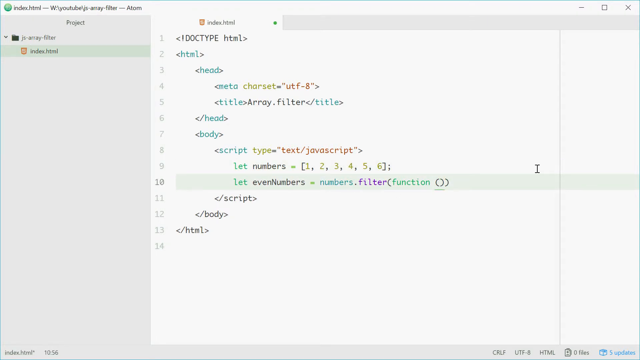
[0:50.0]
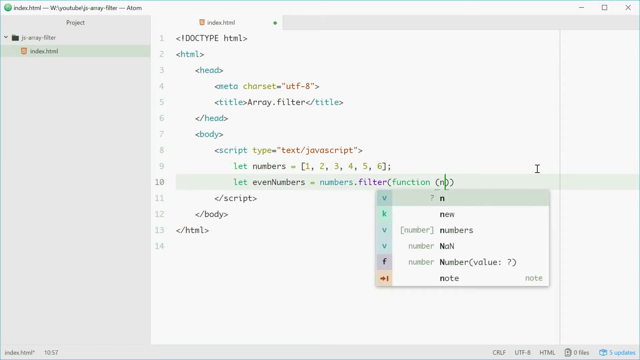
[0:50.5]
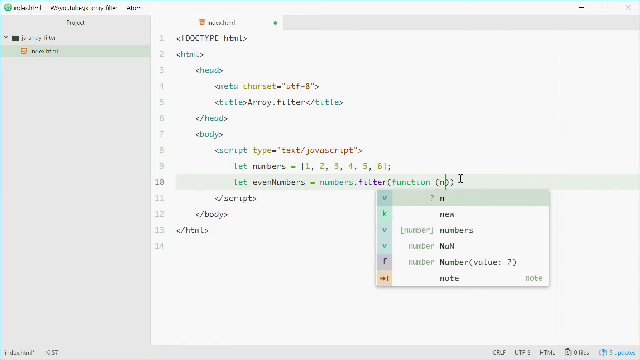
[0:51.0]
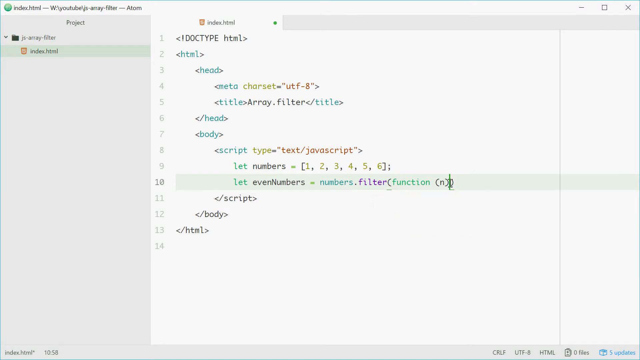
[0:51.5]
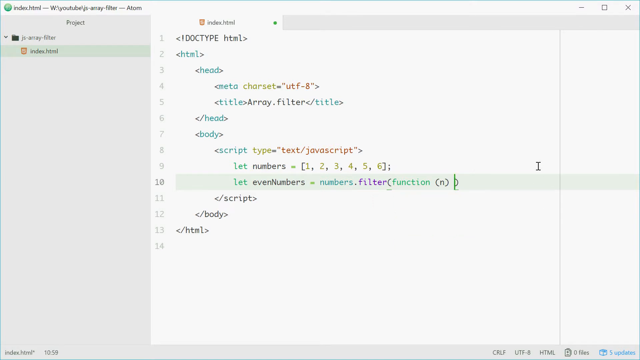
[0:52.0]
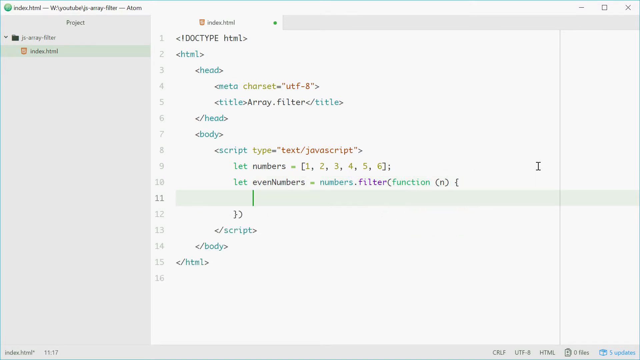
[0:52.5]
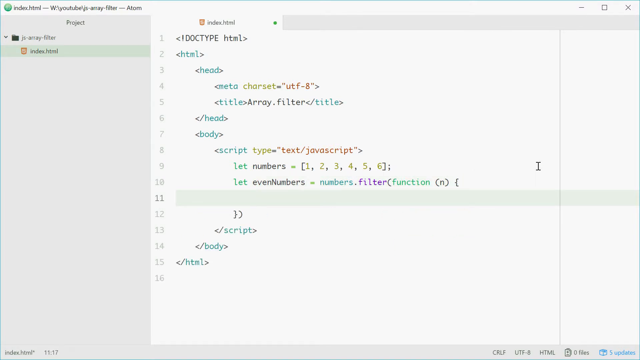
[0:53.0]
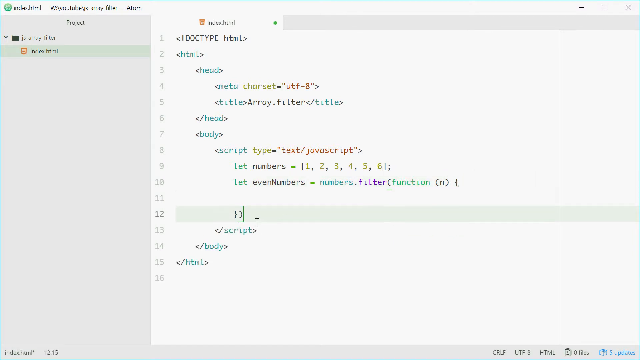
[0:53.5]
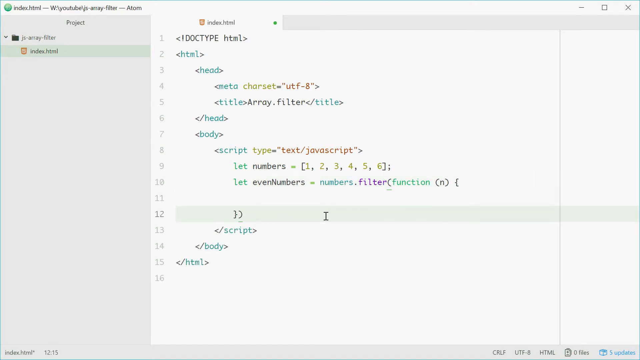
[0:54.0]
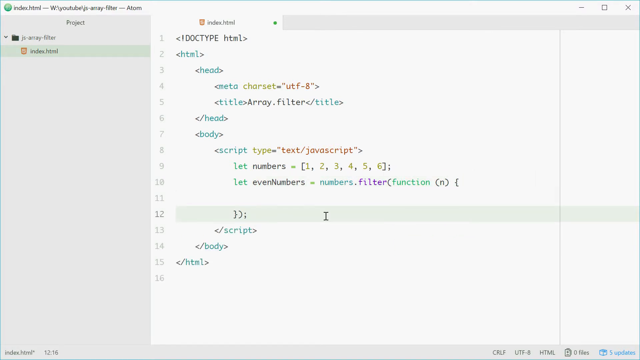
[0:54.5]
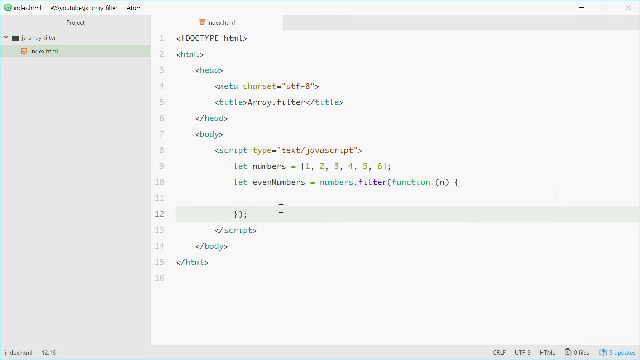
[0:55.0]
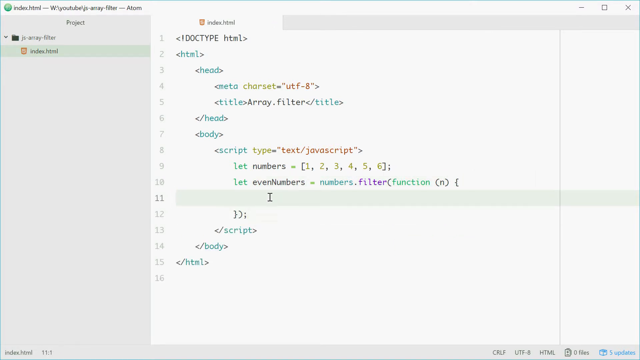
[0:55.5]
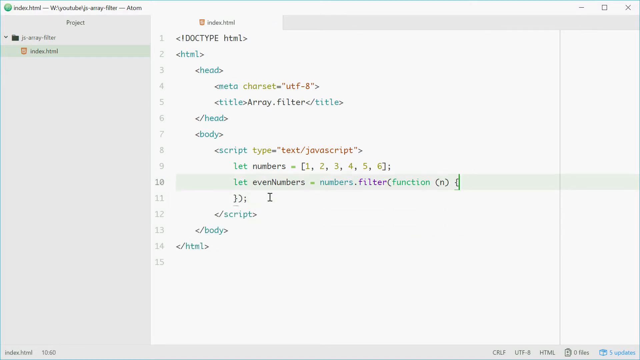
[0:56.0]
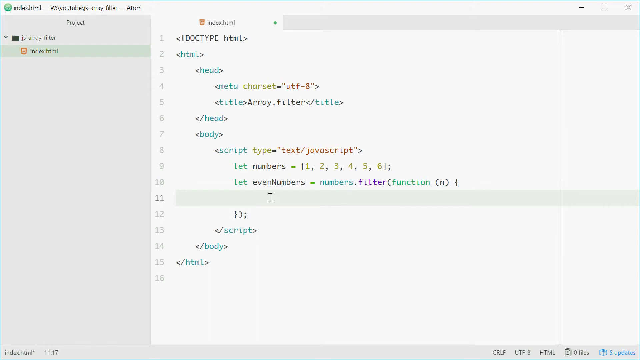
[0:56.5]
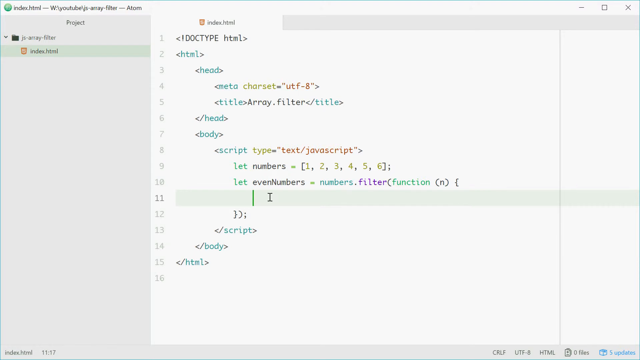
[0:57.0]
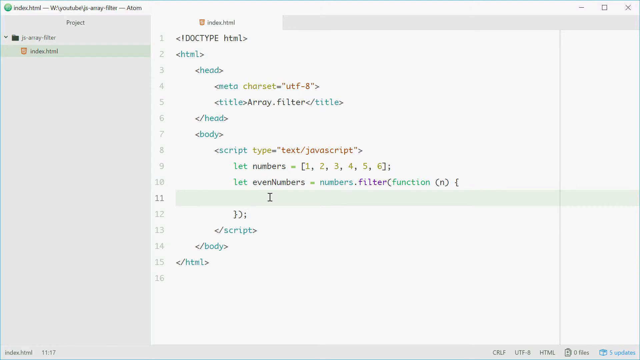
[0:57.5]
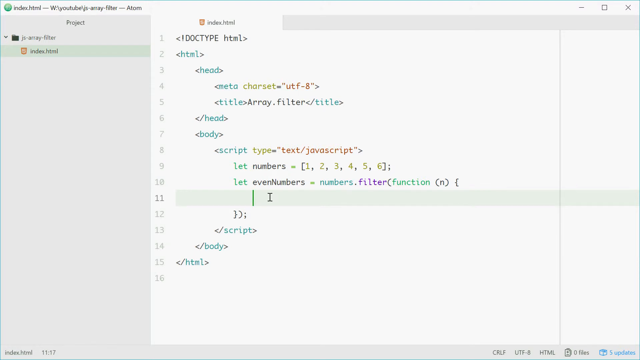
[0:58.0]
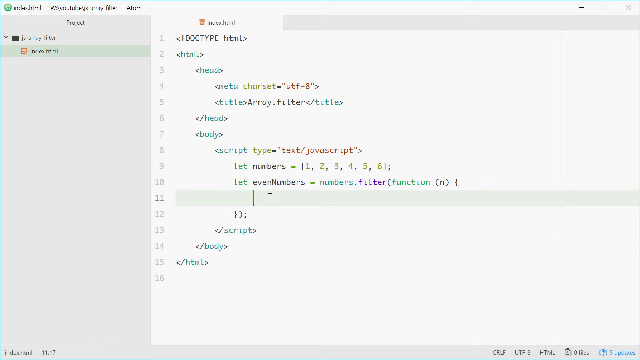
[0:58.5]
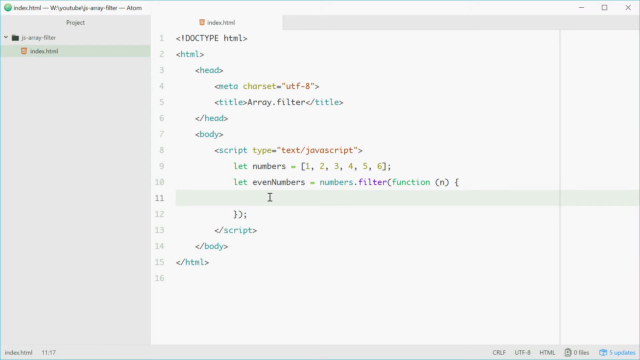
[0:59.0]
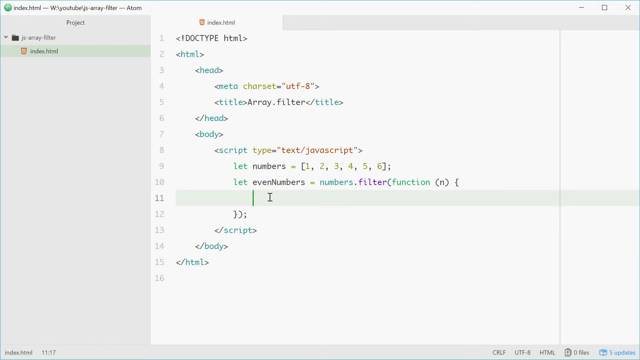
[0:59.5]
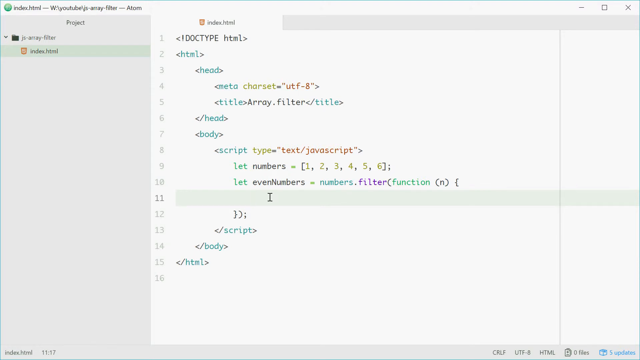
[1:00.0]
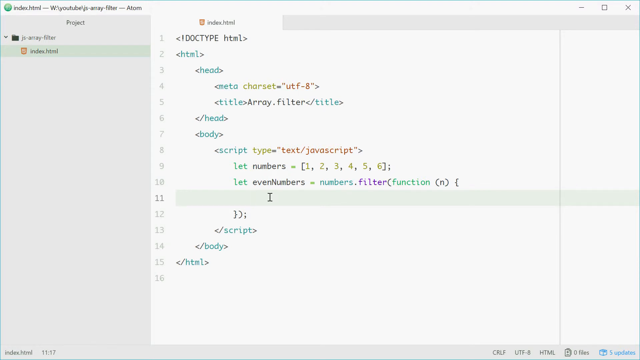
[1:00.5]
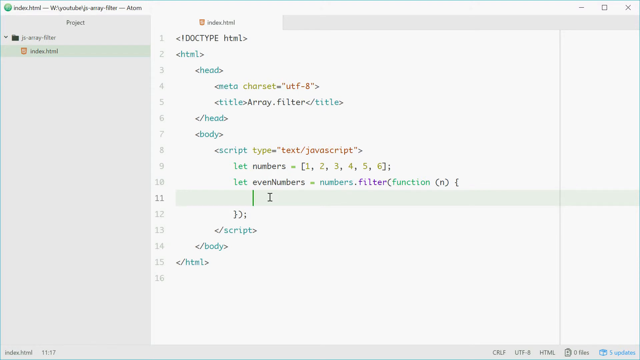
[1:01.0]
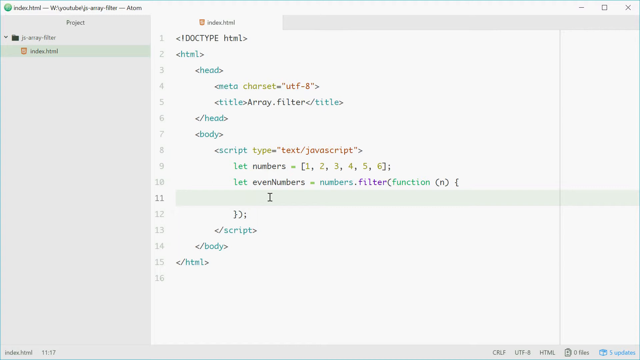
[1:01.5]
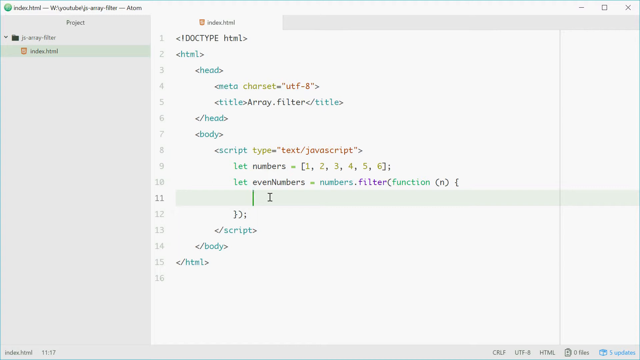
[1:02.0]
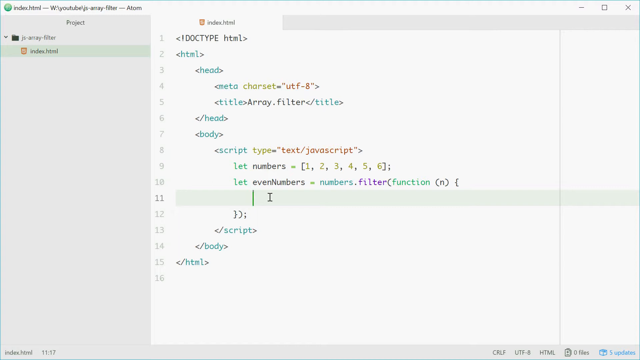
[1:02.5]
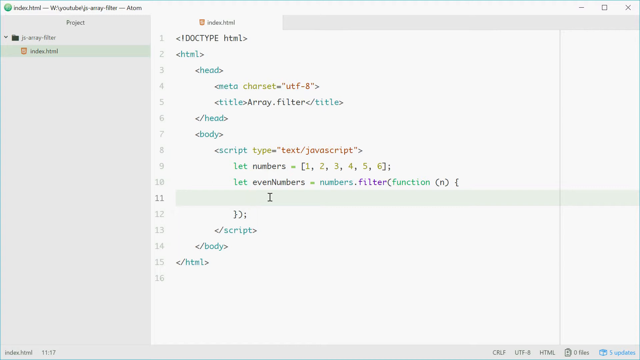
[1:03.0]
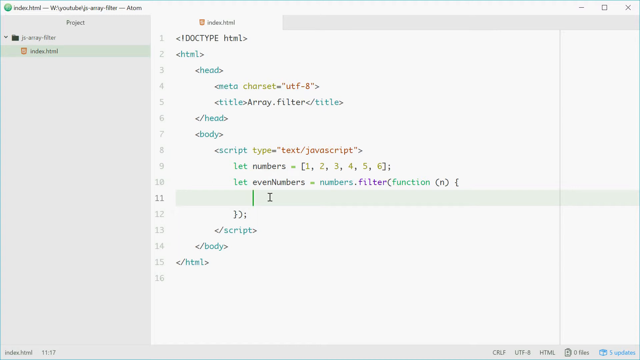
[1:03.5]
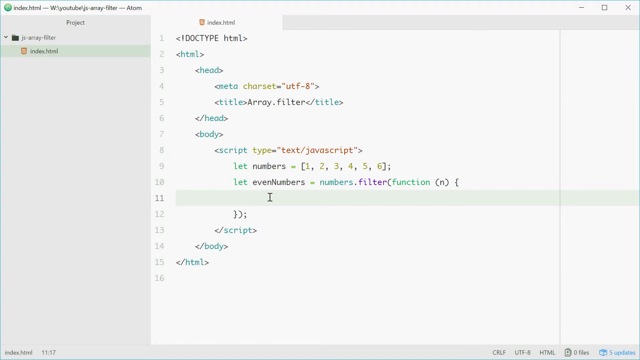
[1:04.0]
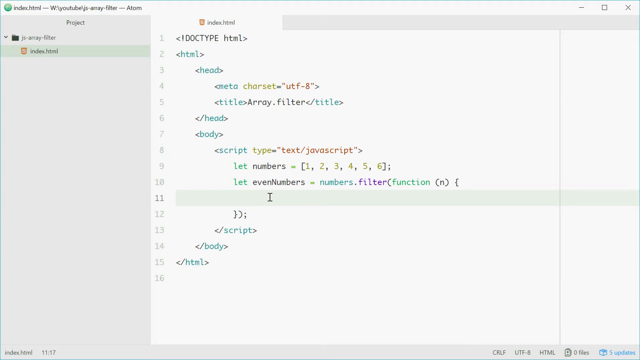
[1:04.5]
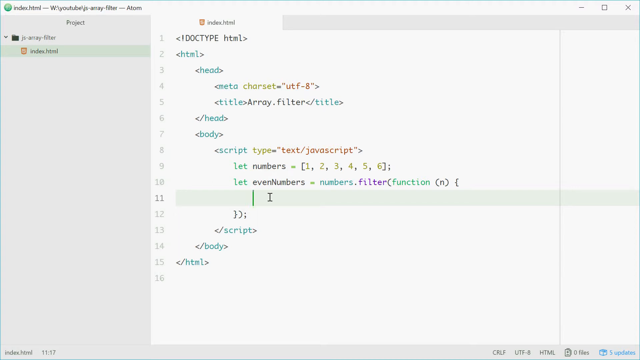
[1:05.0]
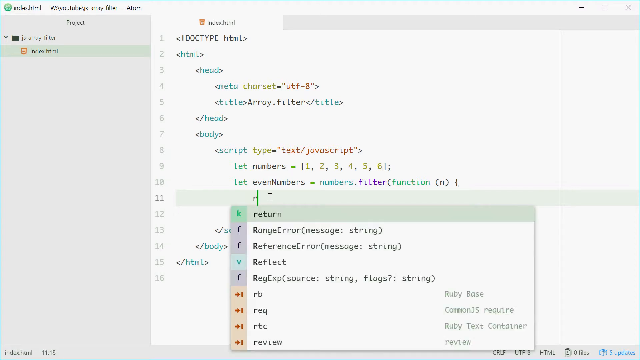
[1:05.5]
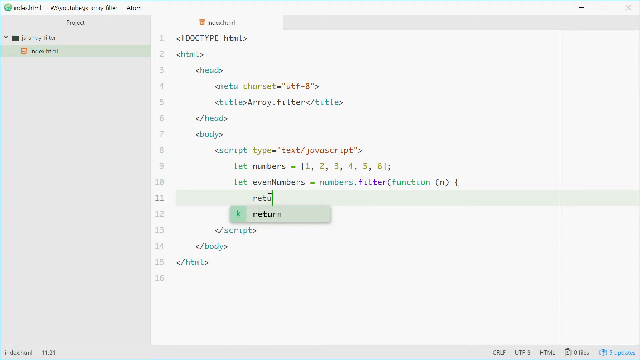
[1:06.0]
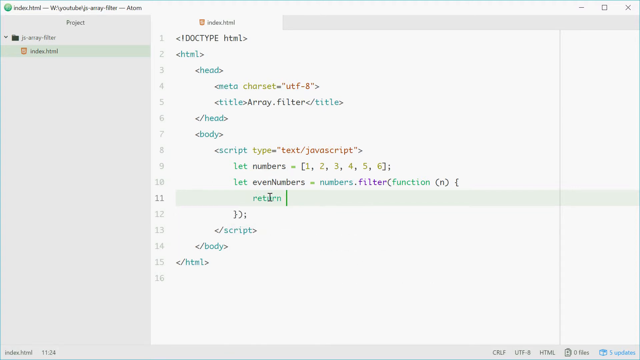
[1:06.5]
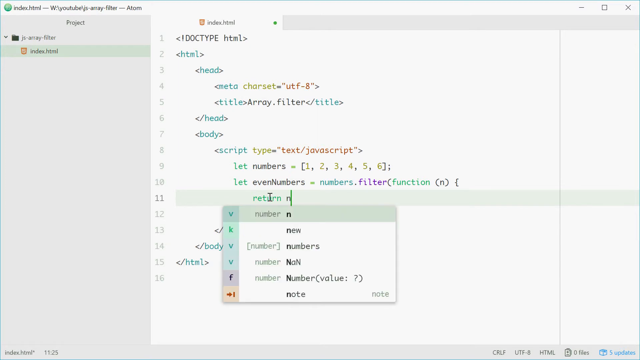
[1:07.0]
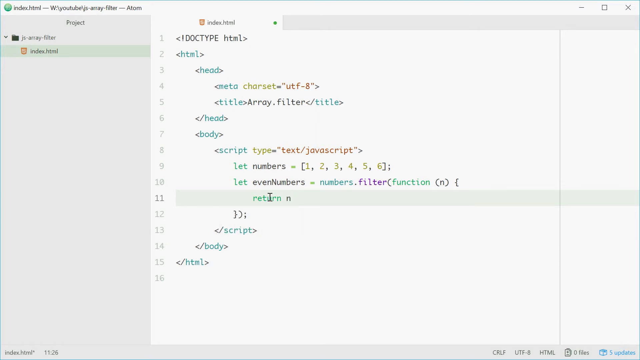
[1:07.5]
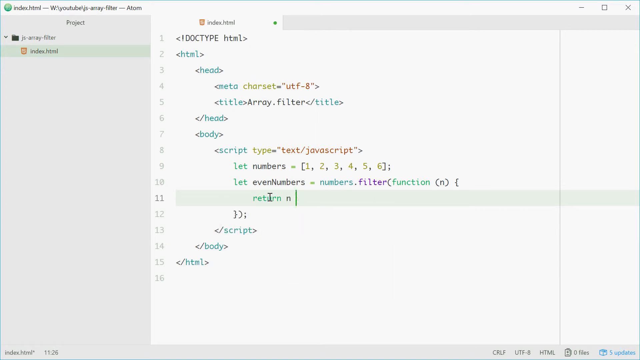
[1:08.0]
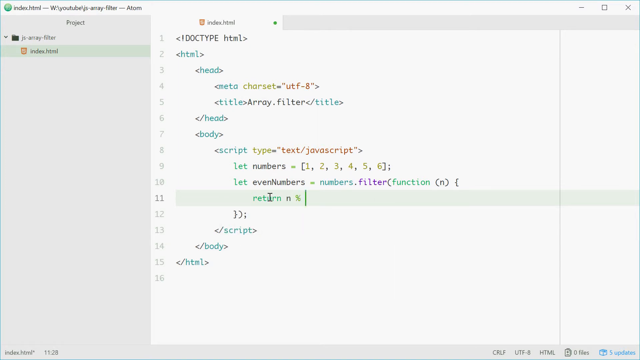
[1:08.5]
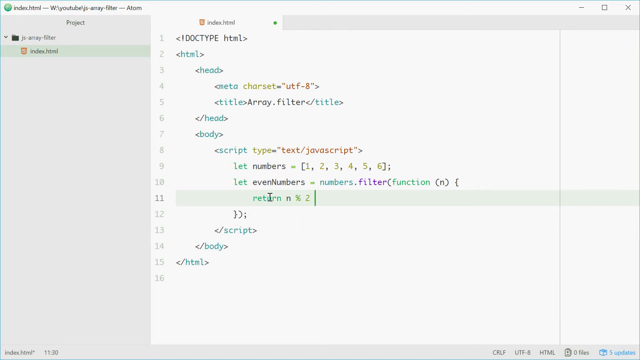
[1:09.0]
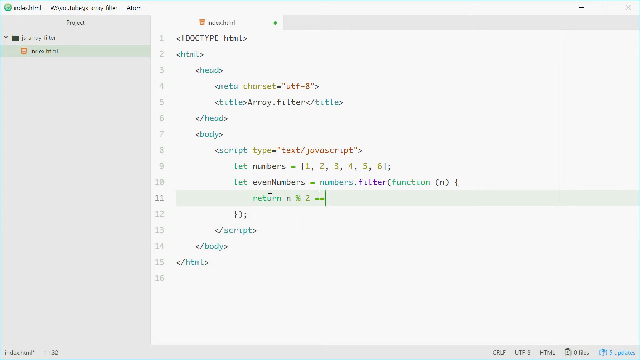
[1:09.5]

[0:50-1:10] On line 10 the person writes "function" with the letter n inside the round brackets and adds a curly bracket, then skips down to line 12 and back to line 11. Line 12 holds a round bracket with a semicolon at the end. Hovering over line 11, the person types "return n % 2 == 0". The word "return" is green, n is black, the percent sign is green, the 2 is more of a yellow, the two equal signs are a darker green, and the 0 is yellow. Whenever the person clicks on a line, it sort of highlights in green. At the top only one tab is open, named "index.html", with a green circle at the very right of the tab.